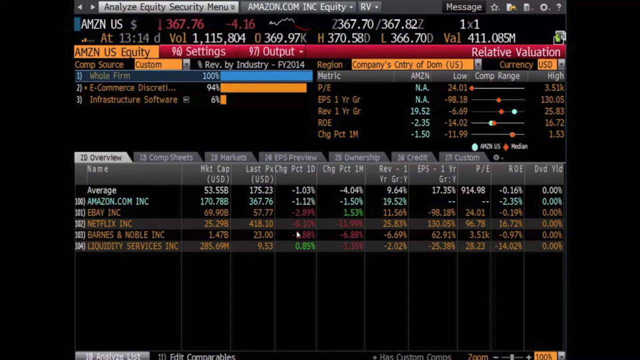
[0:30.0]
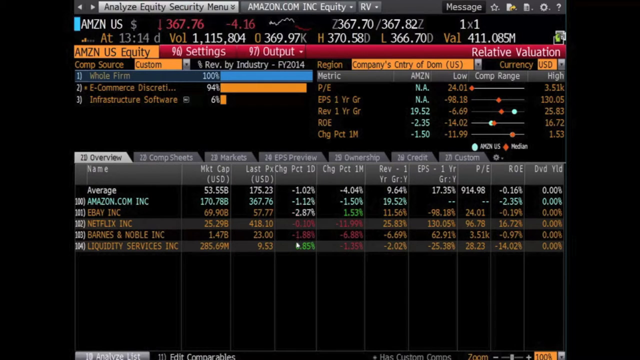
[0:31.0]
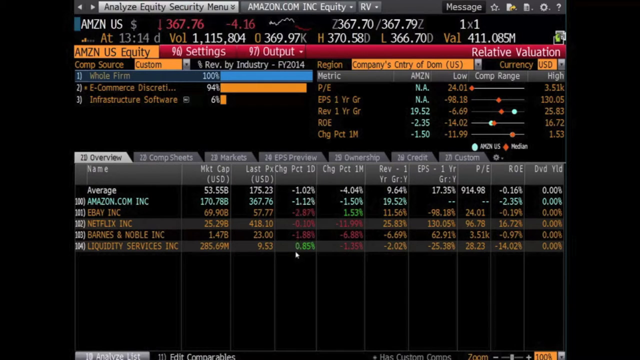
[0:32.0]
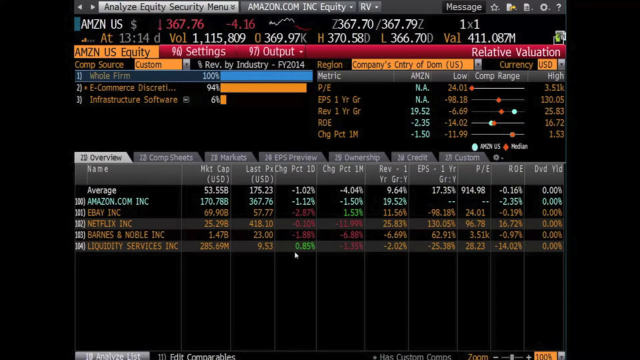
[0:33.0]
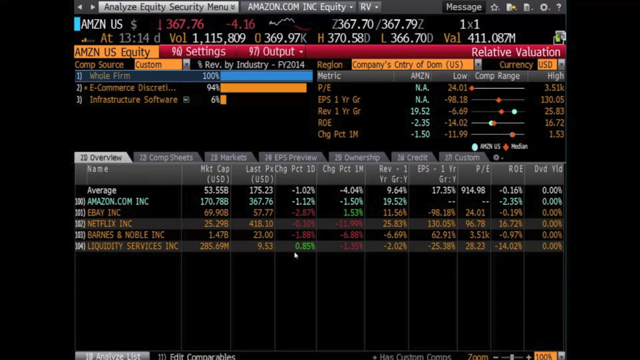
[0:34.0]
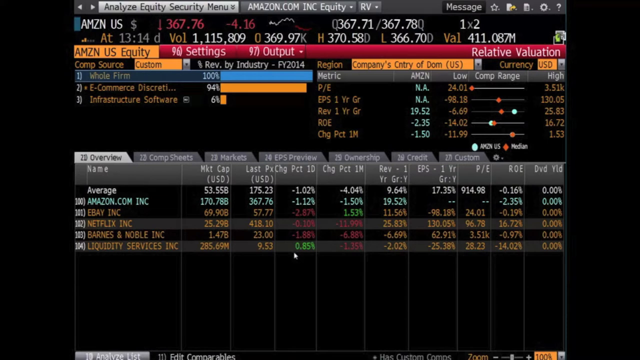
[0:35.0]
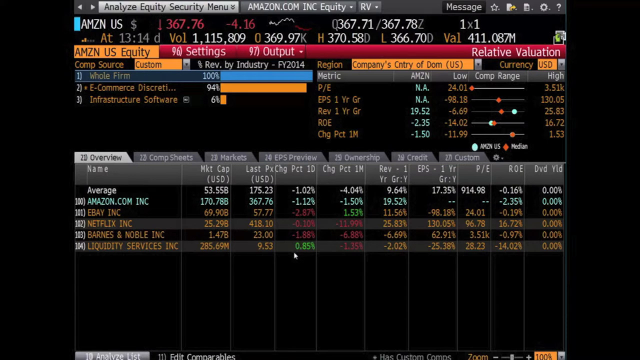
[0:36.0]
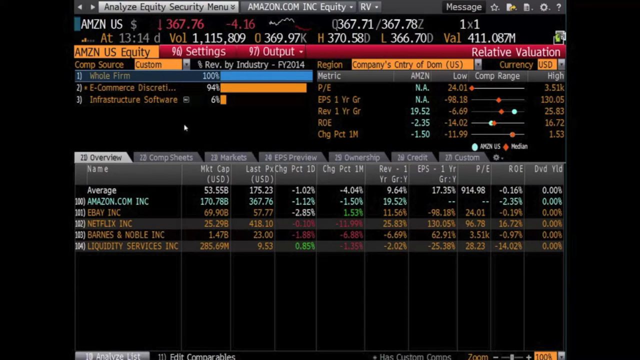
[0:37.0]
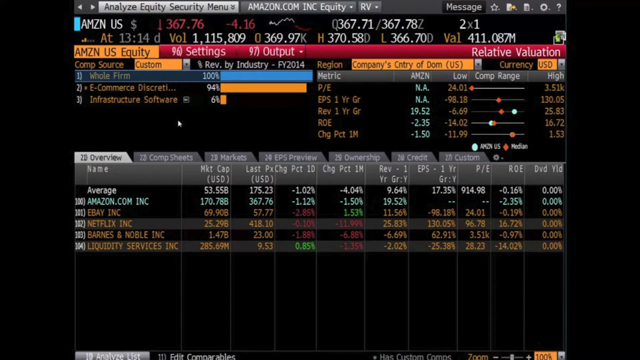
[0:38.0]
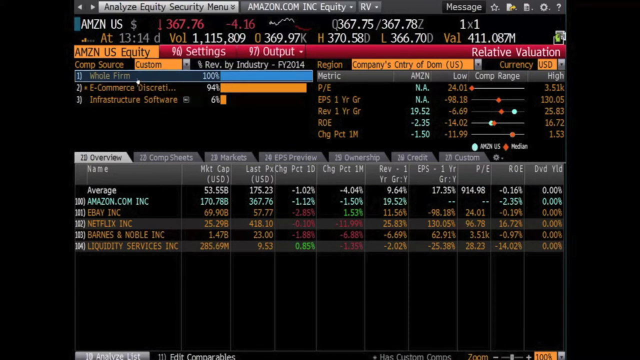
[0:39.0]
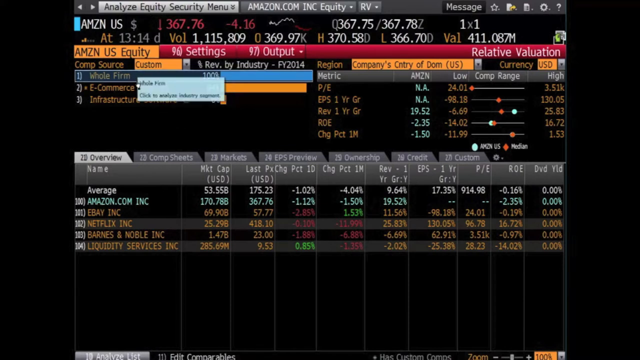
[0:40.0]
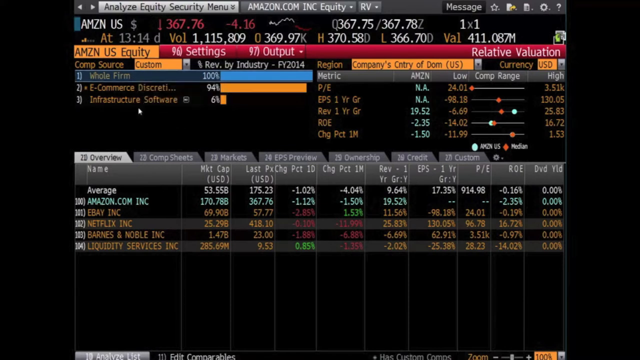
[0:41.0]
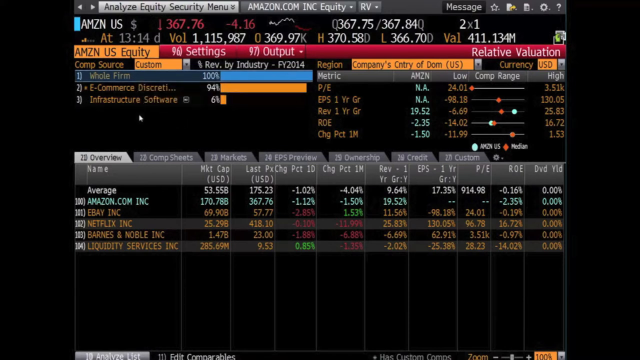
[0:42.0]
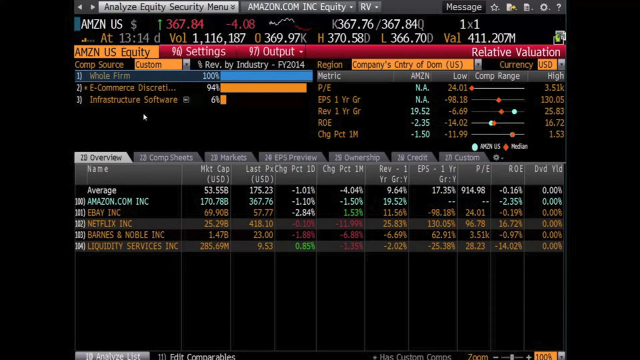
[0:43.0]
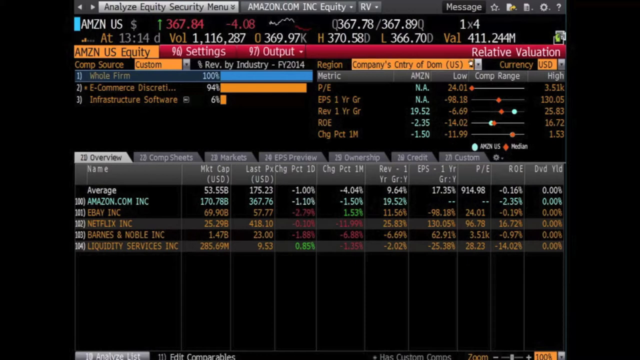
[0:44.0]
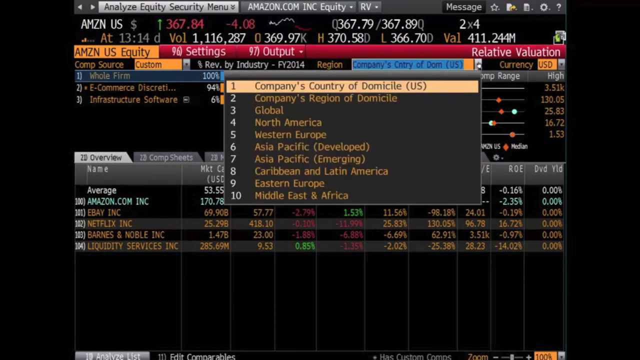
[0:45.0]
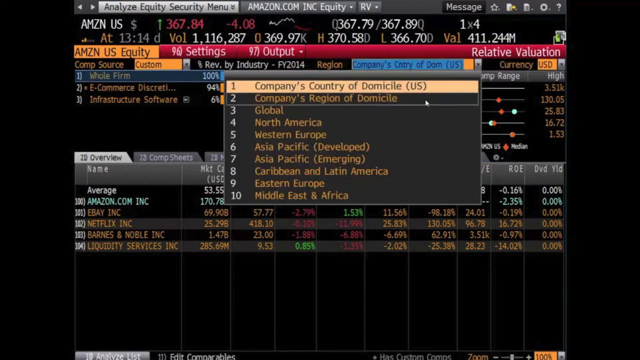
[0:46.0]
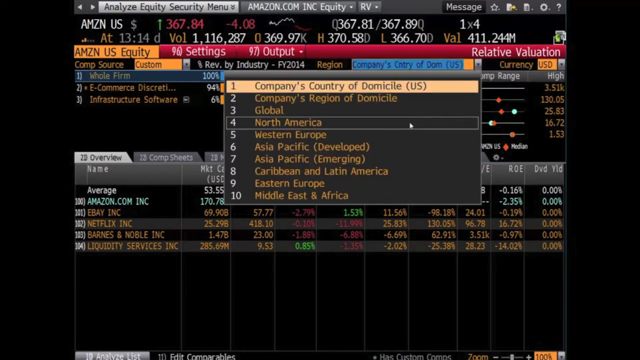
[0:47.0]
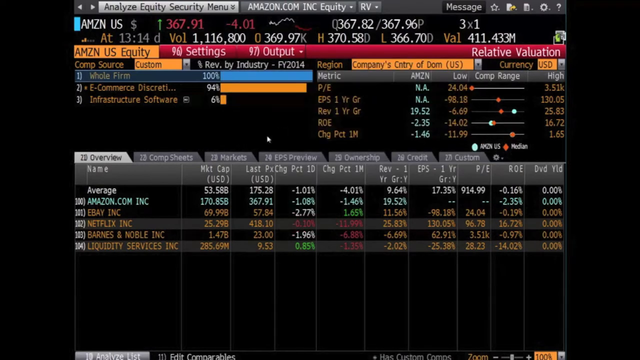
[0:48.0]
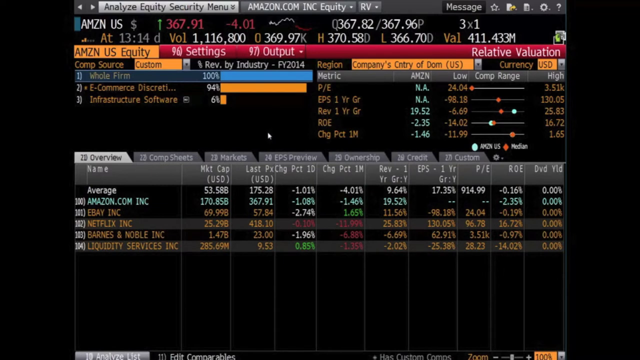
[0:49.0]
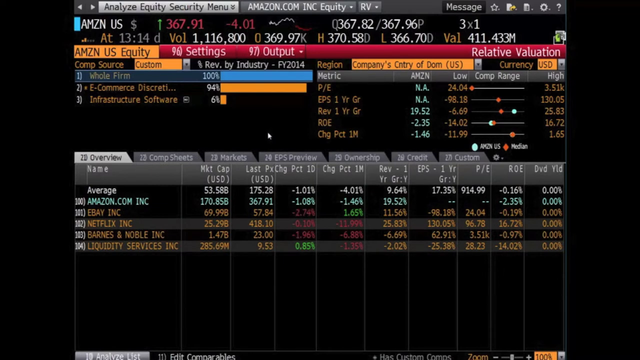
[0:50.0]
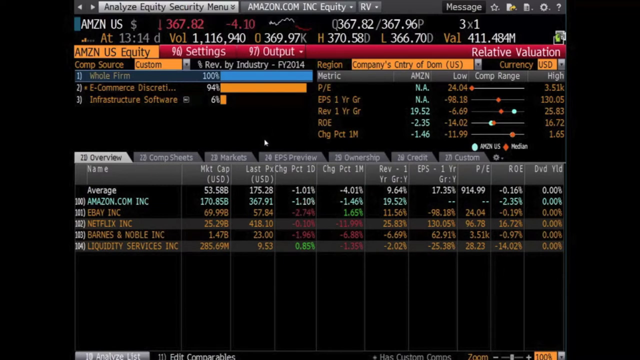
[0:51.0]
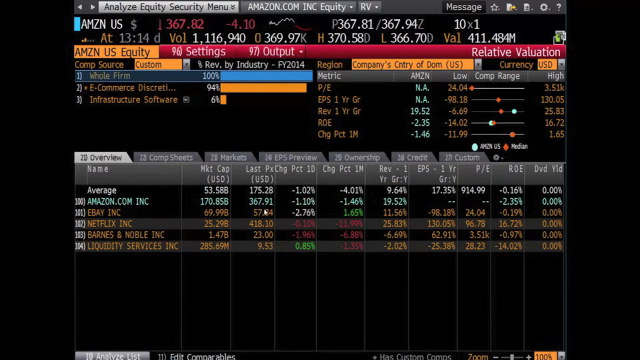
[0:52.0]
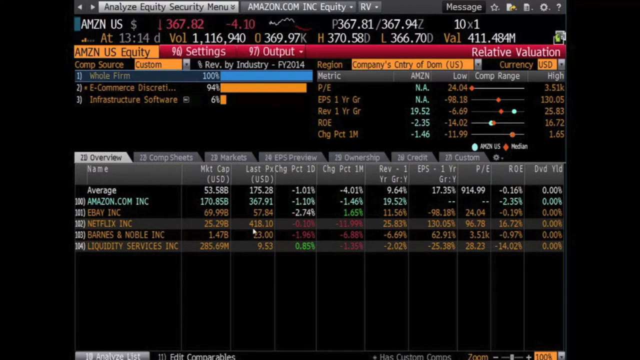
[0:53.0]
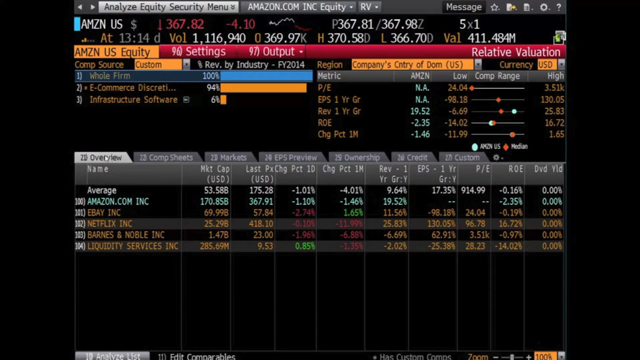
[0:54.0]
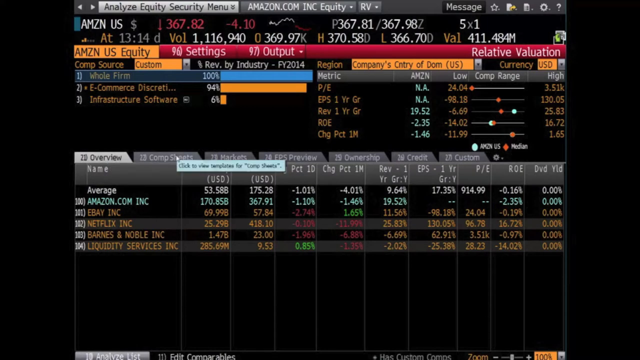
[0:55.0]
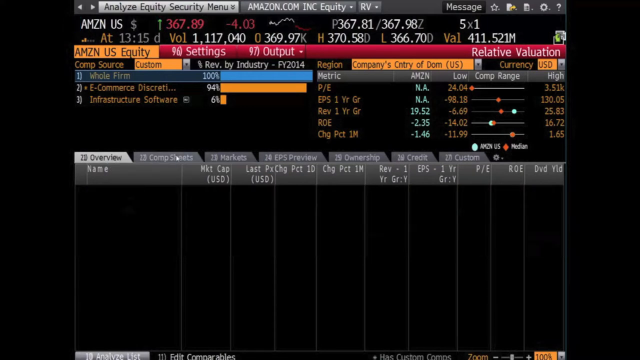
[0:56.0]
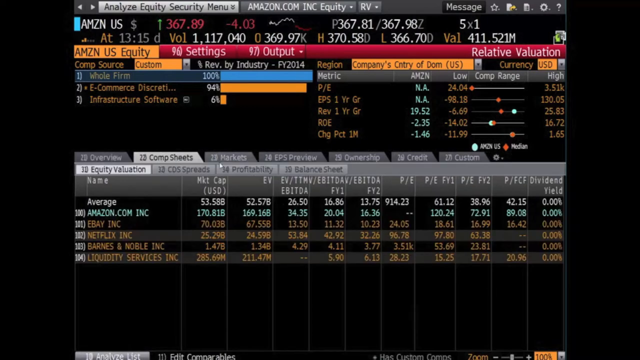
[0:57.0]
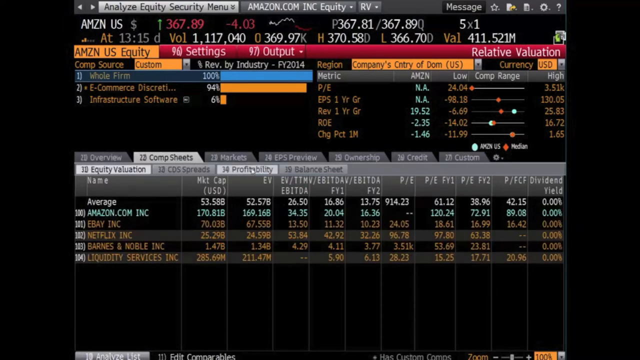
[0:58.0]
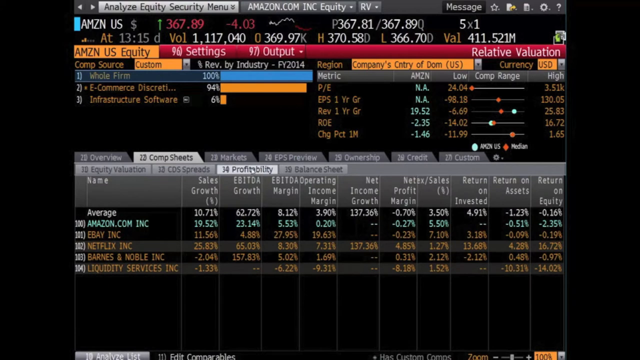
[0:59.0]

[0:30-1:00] One screen of software that monitors various financial information about firms is shown. It displays market cap, price changes in percentages, and lows and highs for each company, with stocks going up and down alongside the names of the companies. Not much happens: someone changes the markets and the region of markets in the software, probably to notice different changes on the stock market. Almost at the end, the tabs change from Overview to Comp Sheets, which shows equity valuation for a few firms such as Amazon, eBay and Netflix. Within Comp Sheets, the view changes to the Profitability tab, showing Sales Growth, Operating Income Margin, Net Income Growth, Profit Margin, Return on Investment and Return on Assets, and at the very end of the sheet, Return on Equity.